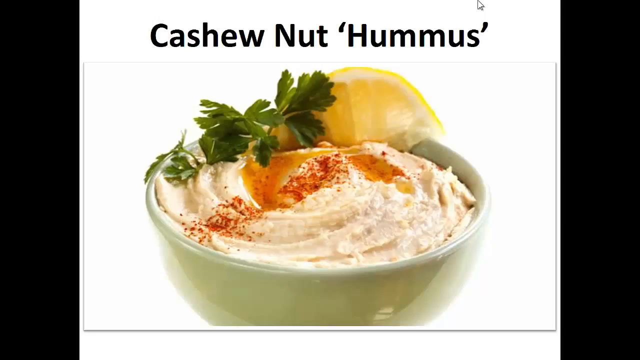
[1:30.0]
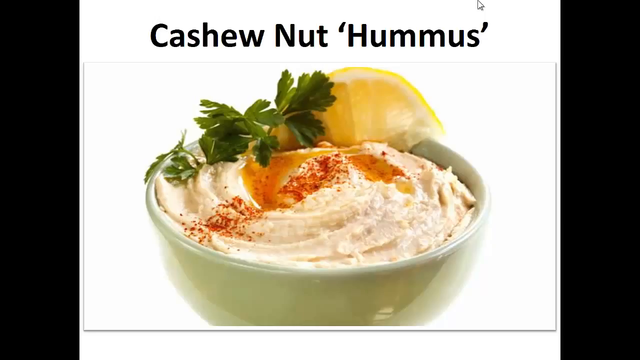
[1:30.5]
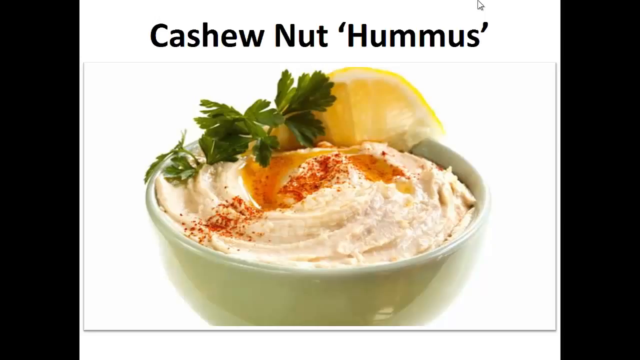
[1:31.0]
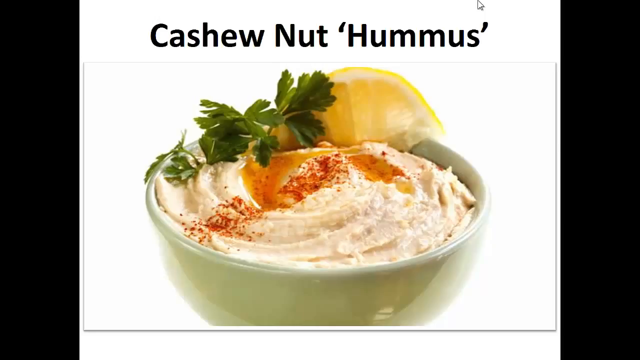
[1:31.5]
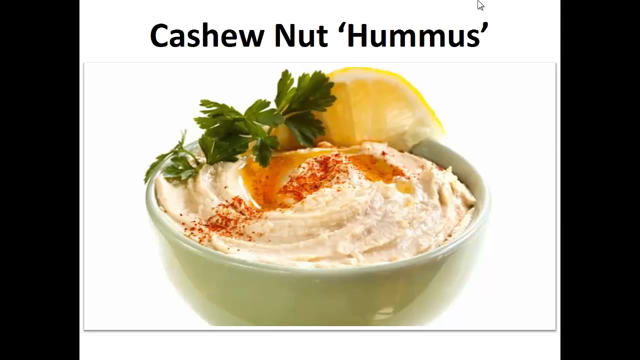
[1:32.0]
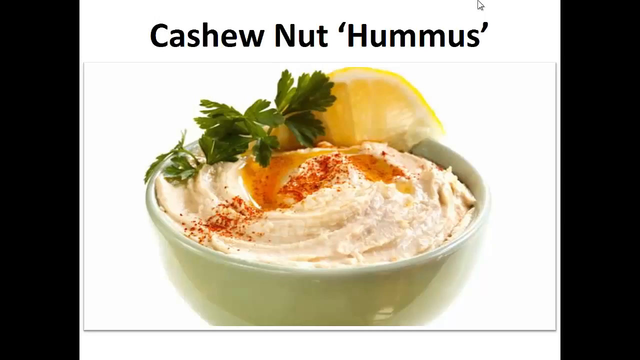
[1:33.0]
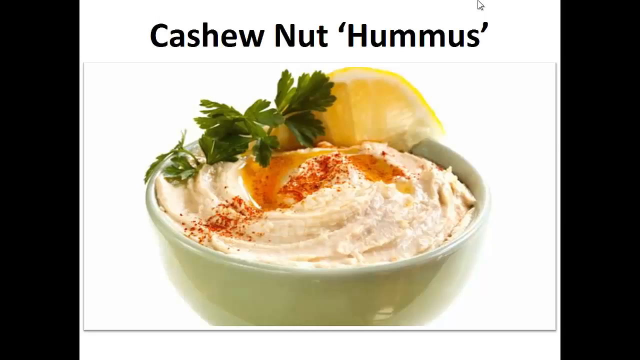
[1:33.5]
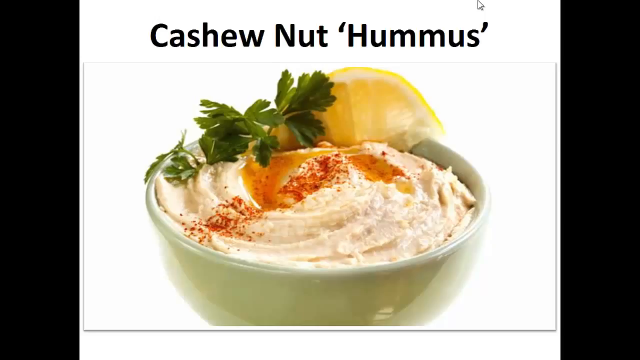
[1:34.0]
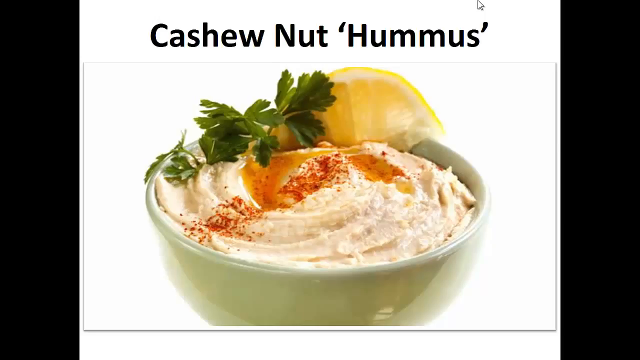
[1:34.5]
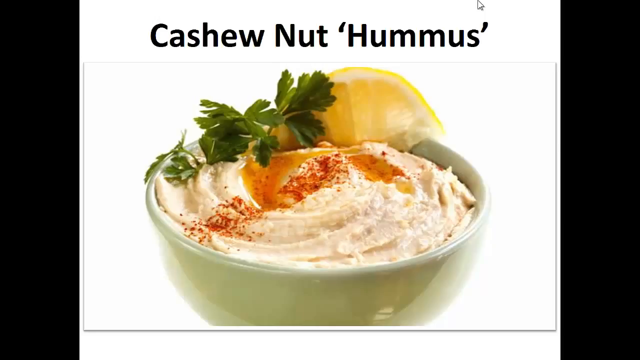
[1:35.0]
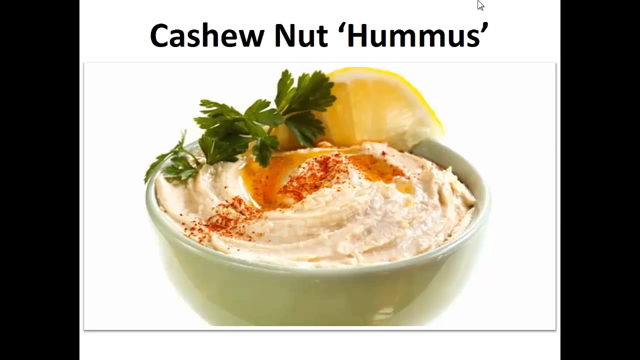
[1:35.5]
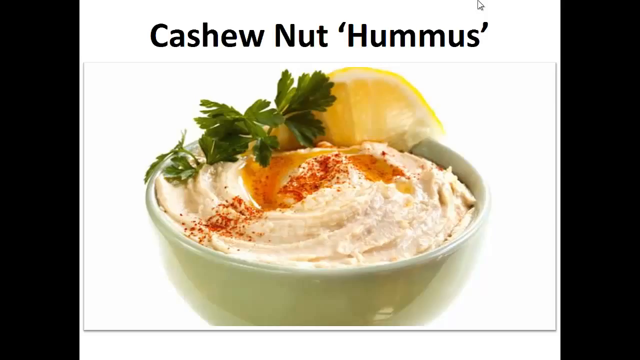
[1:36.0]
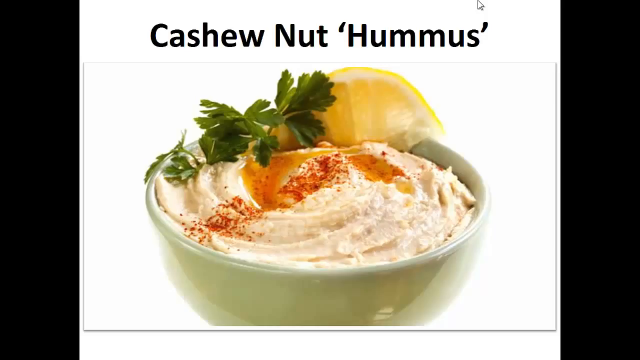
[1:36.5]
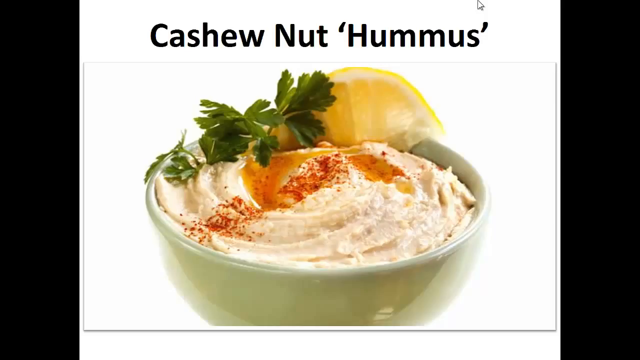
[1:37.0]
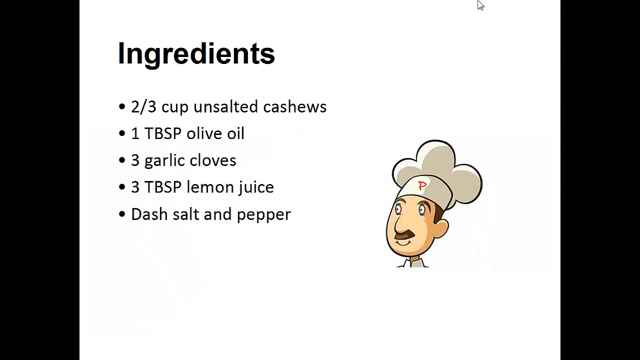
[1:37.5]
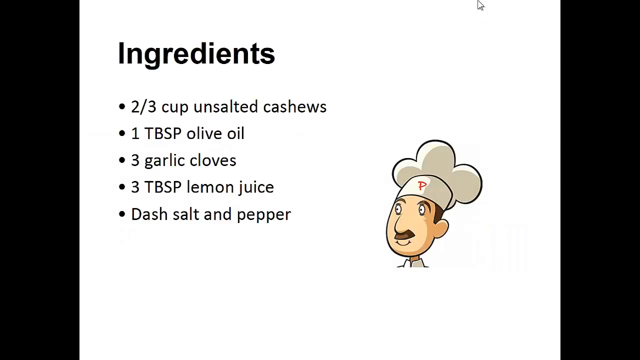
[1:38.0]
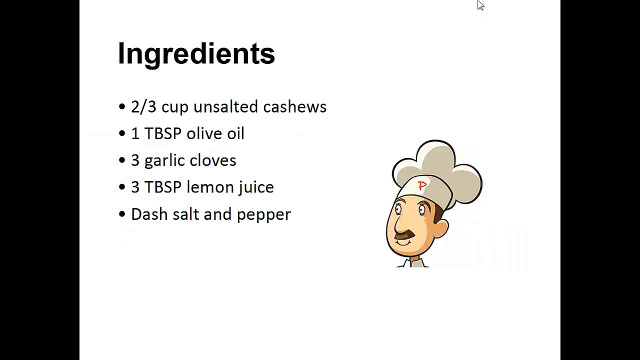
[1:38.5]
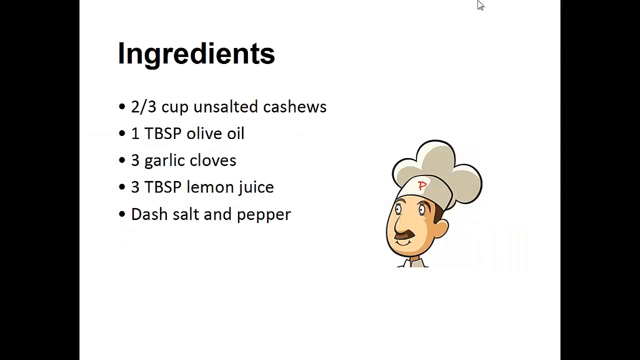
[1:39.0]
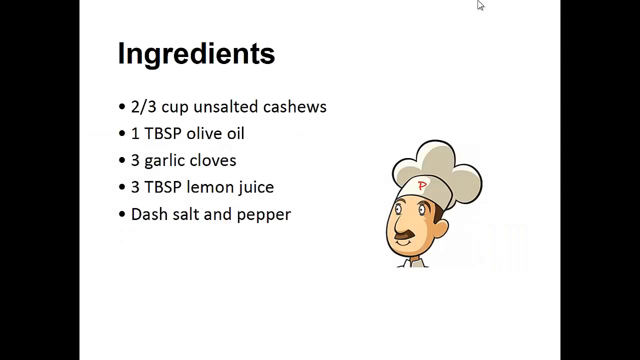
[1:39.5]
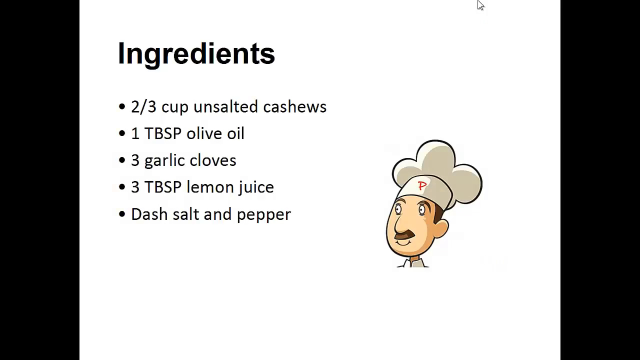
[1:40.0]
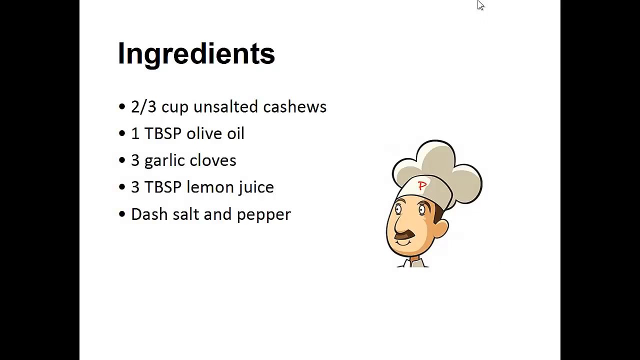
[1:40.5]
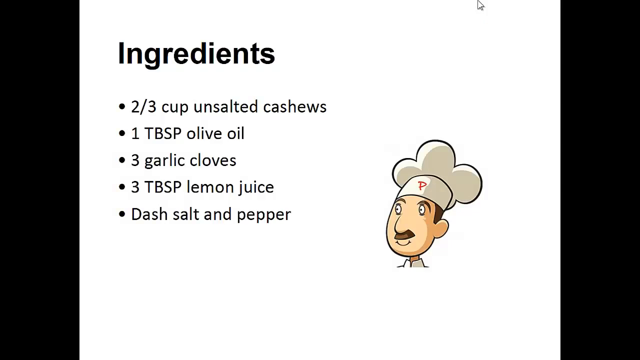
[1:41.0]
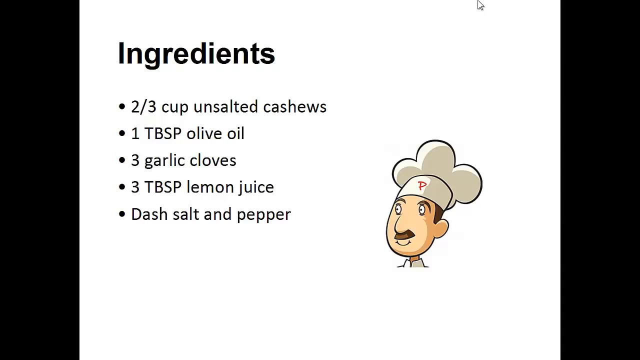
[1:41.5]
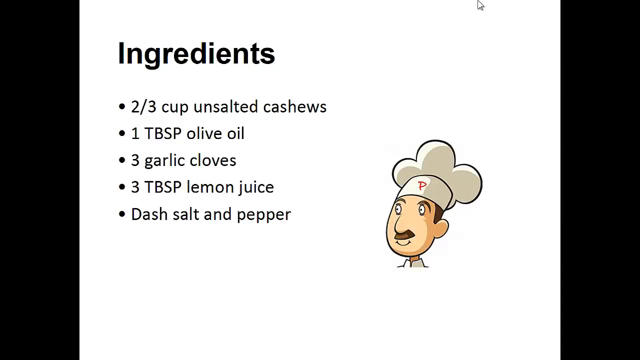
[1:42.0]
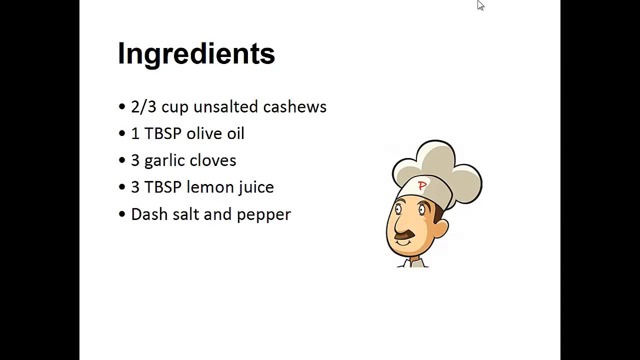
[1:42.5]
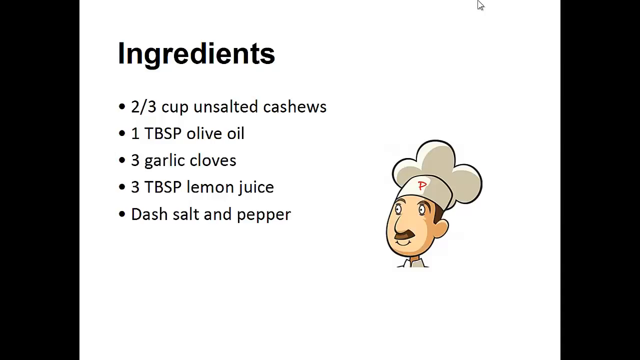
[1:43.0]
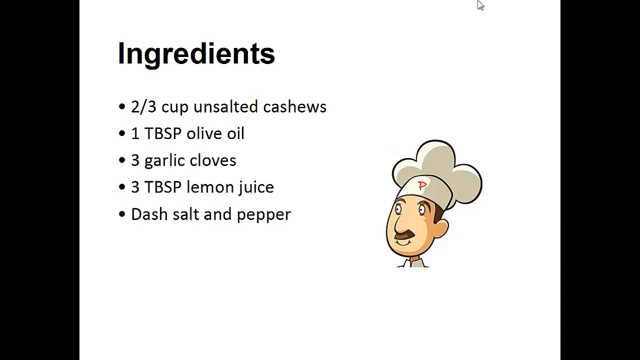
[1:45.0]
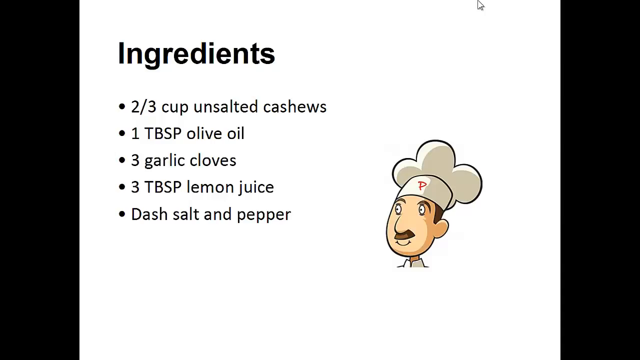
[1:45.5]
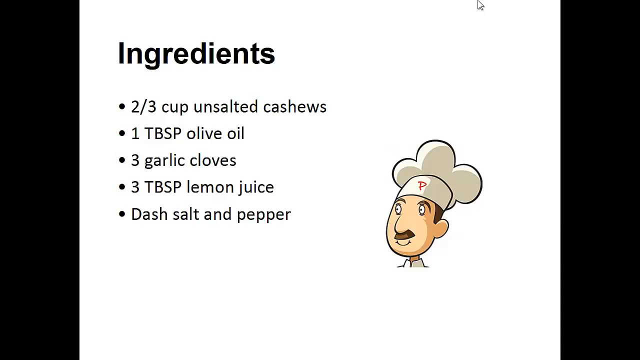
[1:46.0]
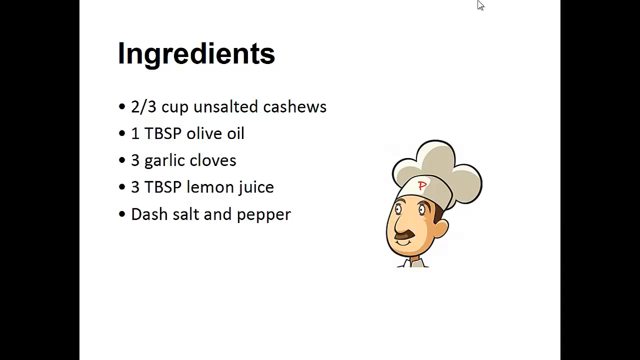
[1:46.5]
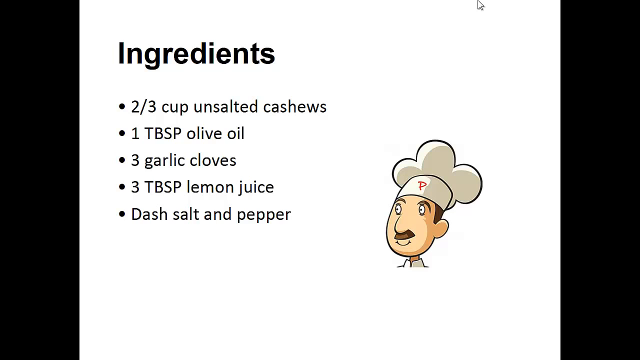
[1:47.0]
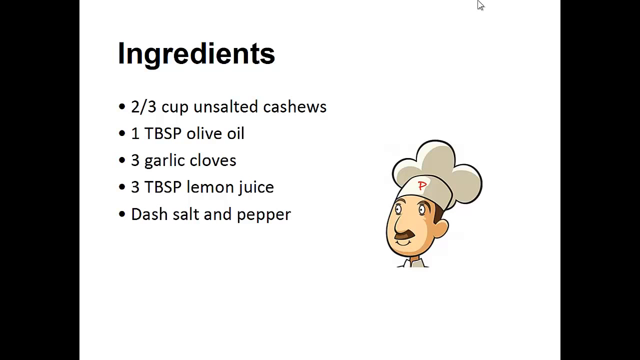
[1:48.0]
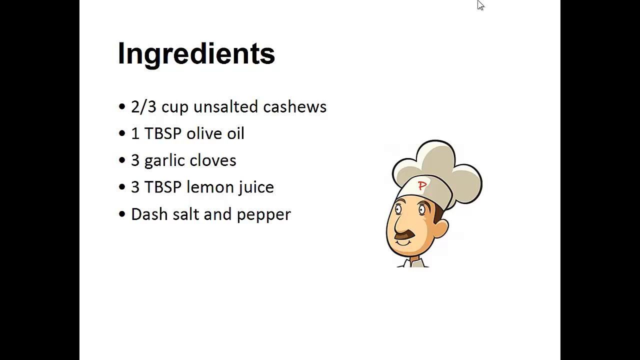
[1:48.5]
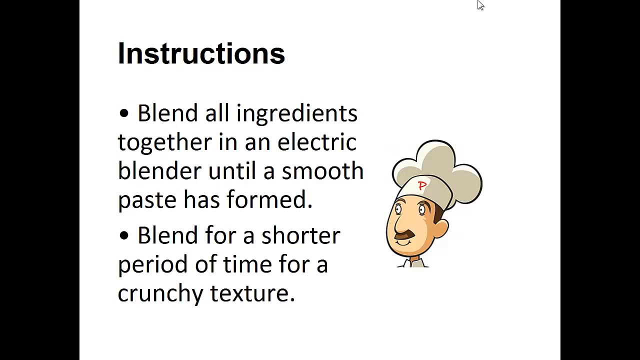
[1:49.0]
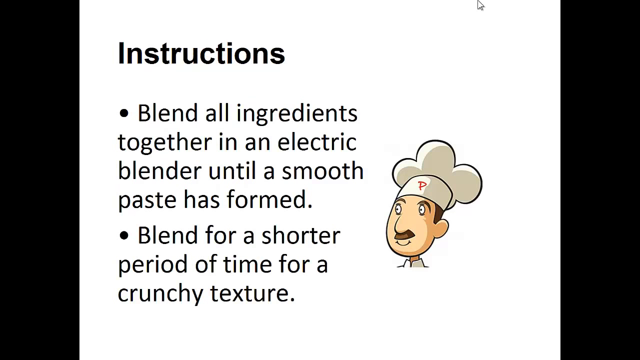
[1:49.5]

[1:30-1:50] The picture of the cashew nut hummus continues, showing the dish in a bowl with the lemon, leaves and orange flavoring. The video then transitions to another screen titled "Ingredients," listing bullet points: a cup of unsalted cashews, 1 tablespoon of olive oil, 3 garlic cloves, 3 tablespoons of lemon juice, and a dash of salt and pepper. A cartoon-looking chef appears on this screen, with a mustache and a chef hat bearing the letter P, all on a white background. In the last few seconds, an instructions screen appears.